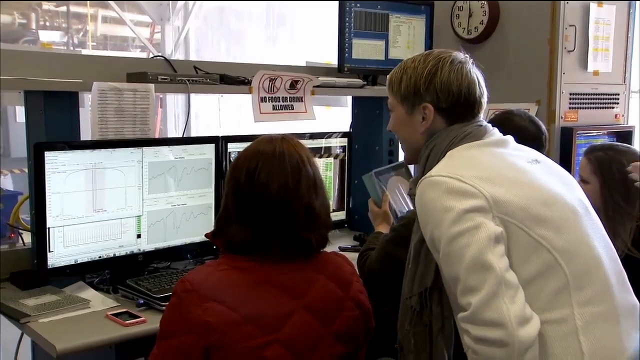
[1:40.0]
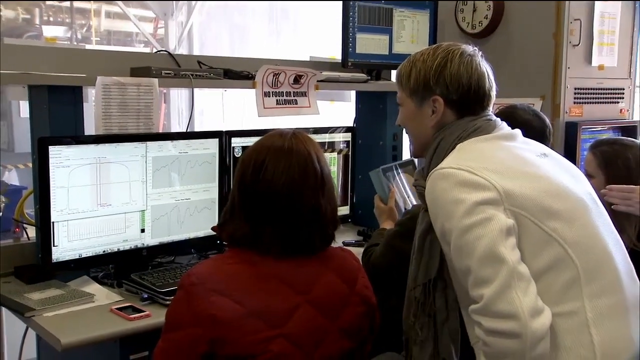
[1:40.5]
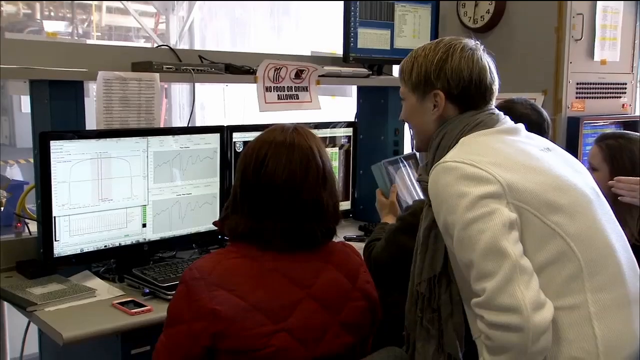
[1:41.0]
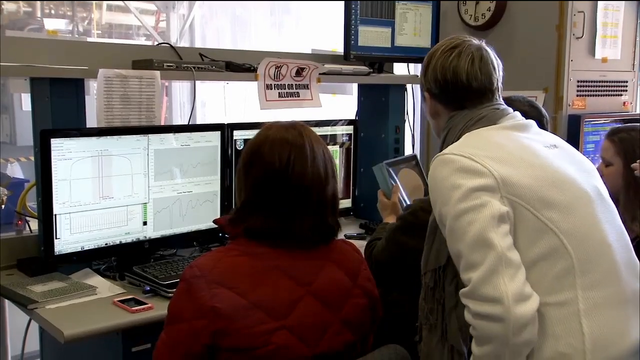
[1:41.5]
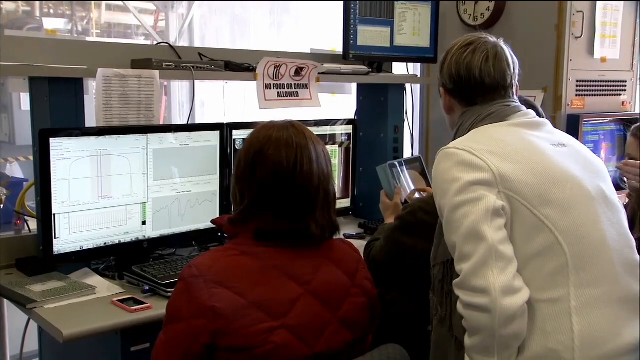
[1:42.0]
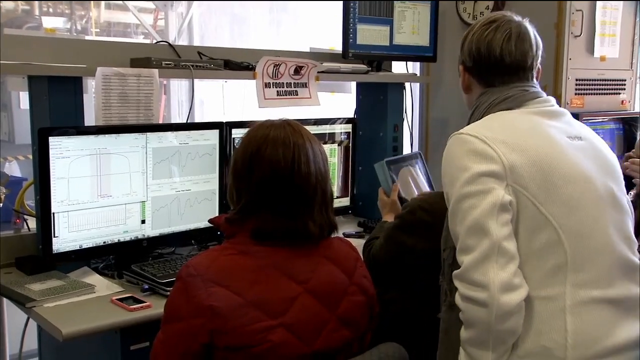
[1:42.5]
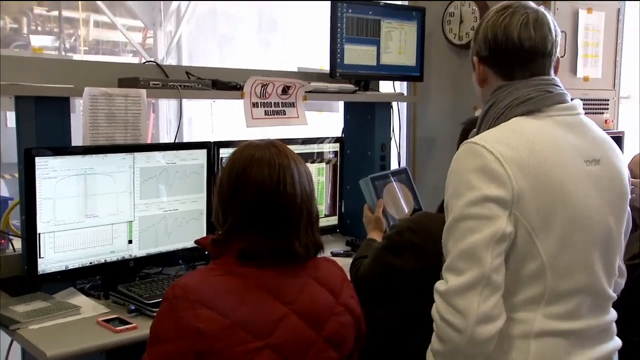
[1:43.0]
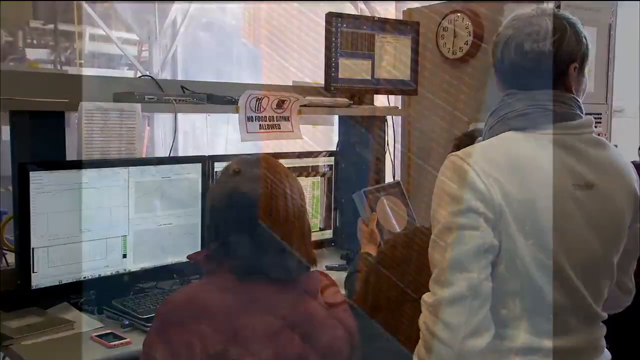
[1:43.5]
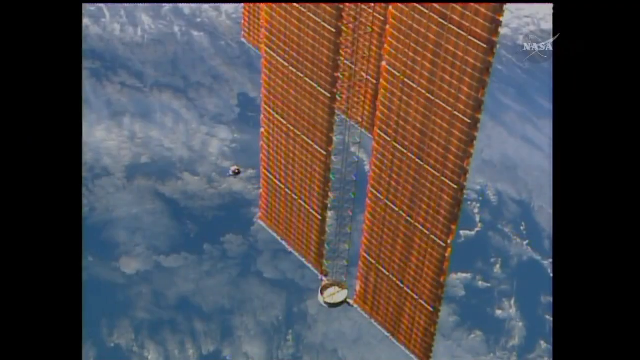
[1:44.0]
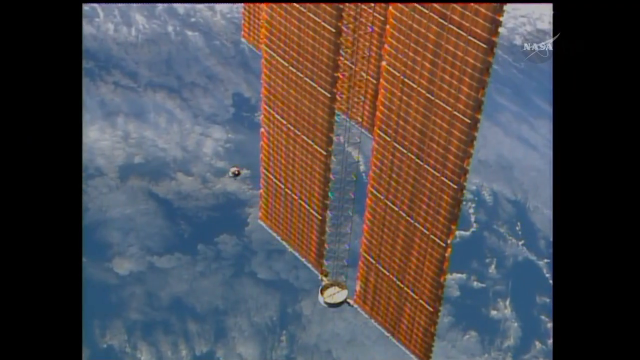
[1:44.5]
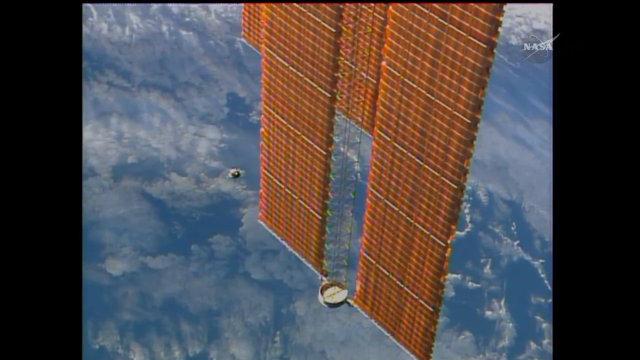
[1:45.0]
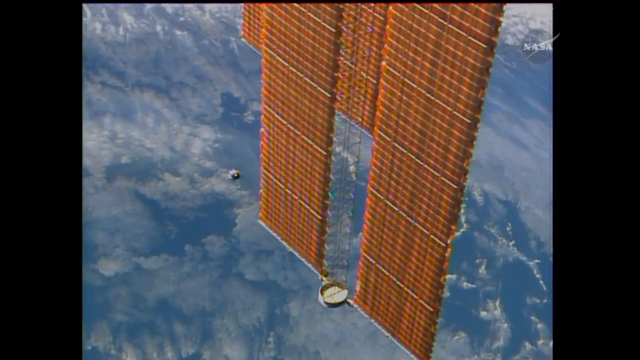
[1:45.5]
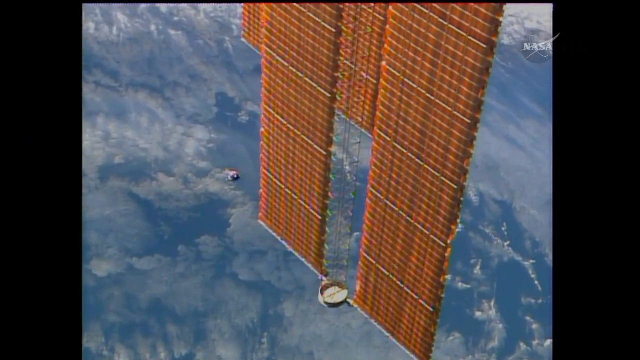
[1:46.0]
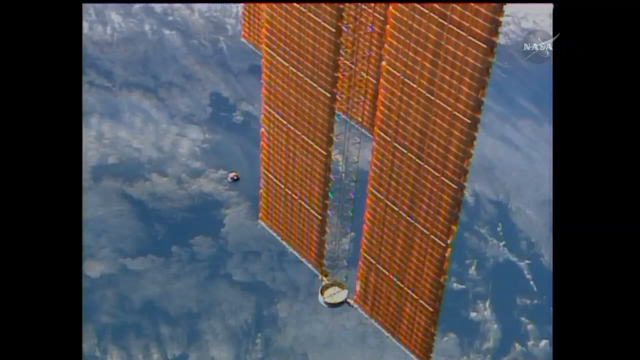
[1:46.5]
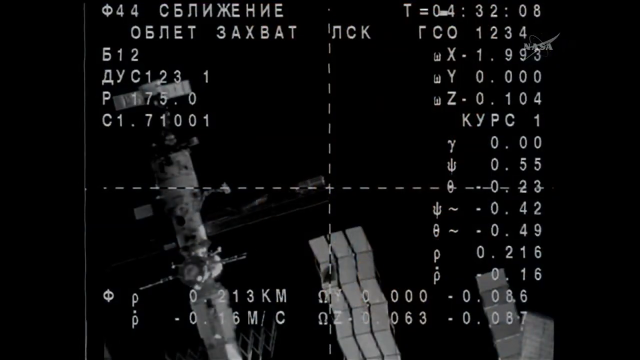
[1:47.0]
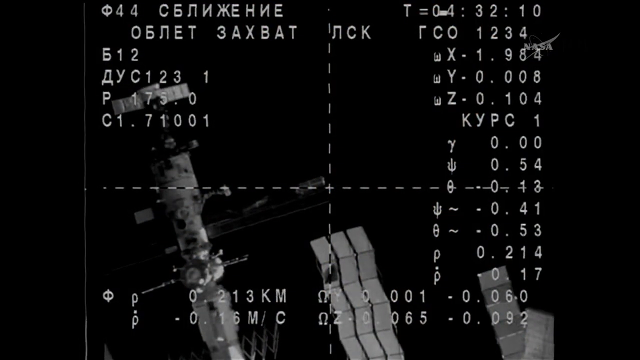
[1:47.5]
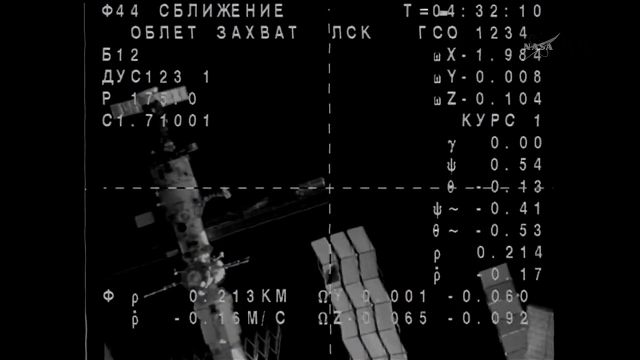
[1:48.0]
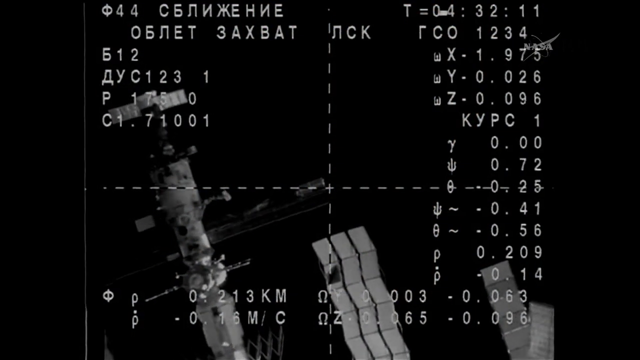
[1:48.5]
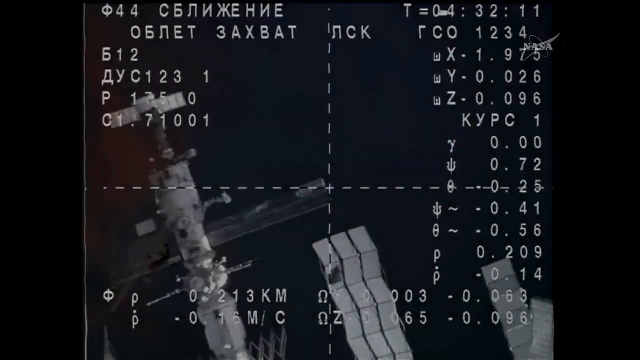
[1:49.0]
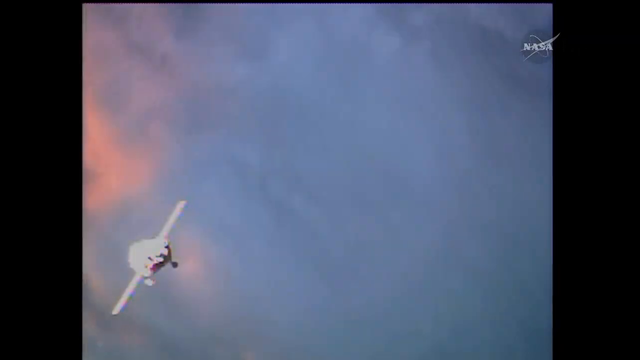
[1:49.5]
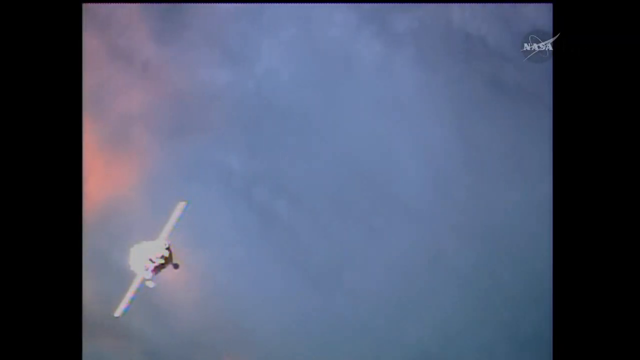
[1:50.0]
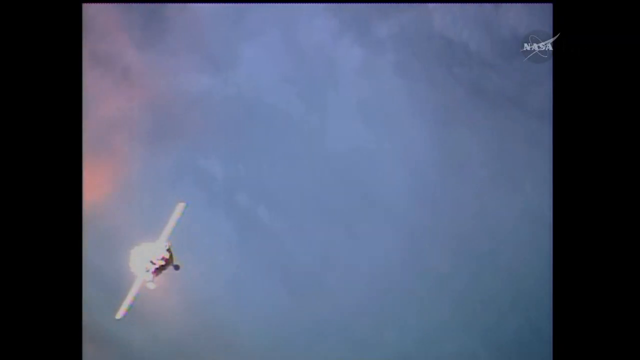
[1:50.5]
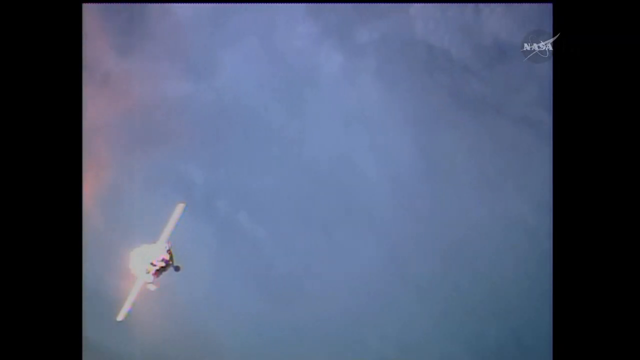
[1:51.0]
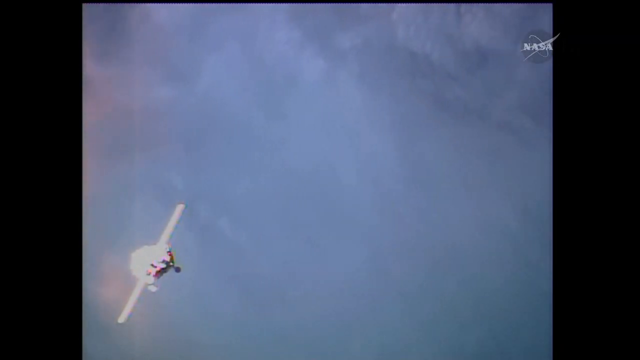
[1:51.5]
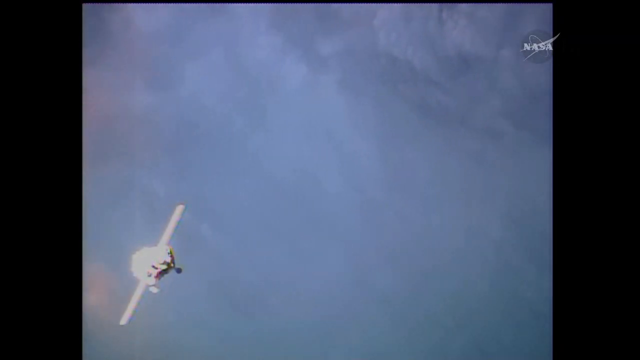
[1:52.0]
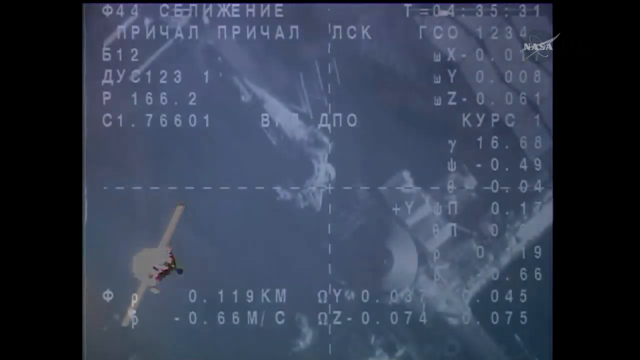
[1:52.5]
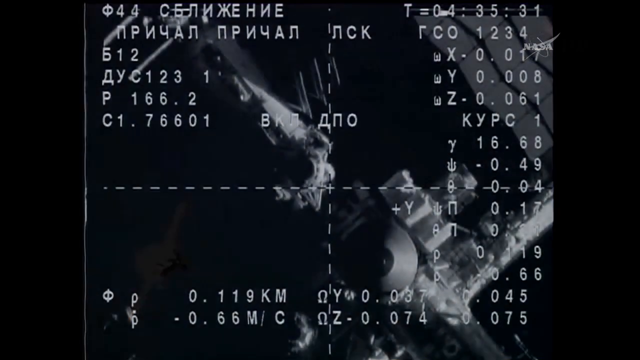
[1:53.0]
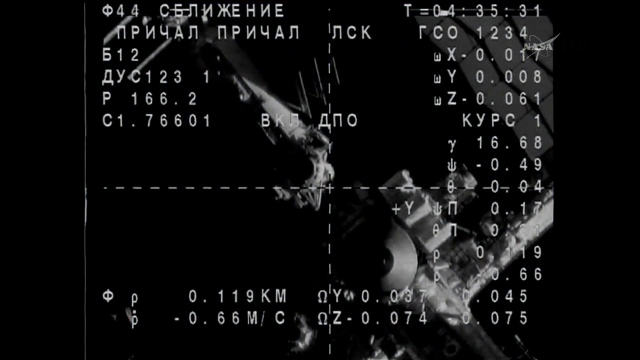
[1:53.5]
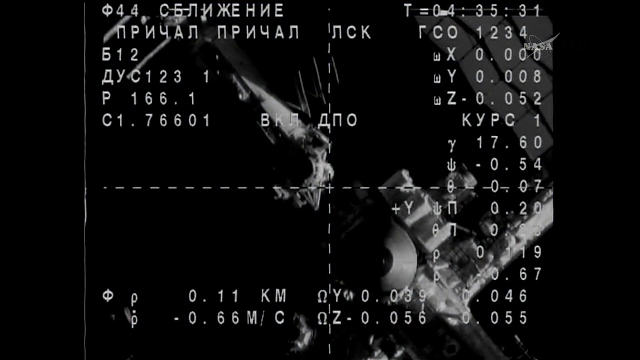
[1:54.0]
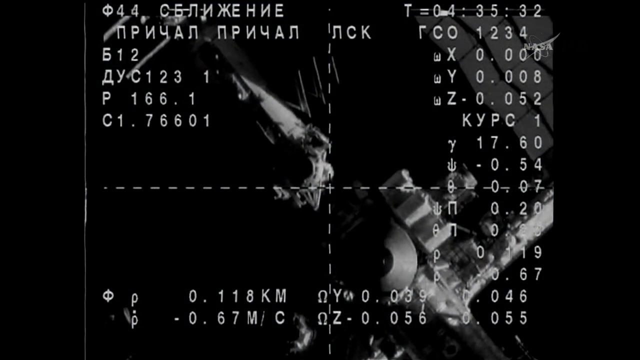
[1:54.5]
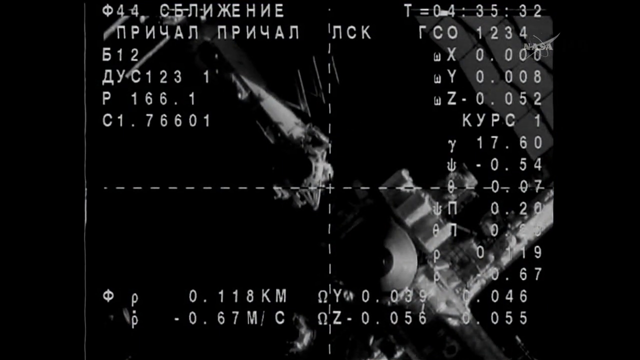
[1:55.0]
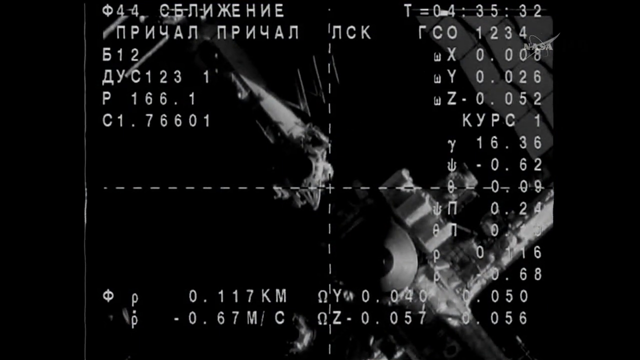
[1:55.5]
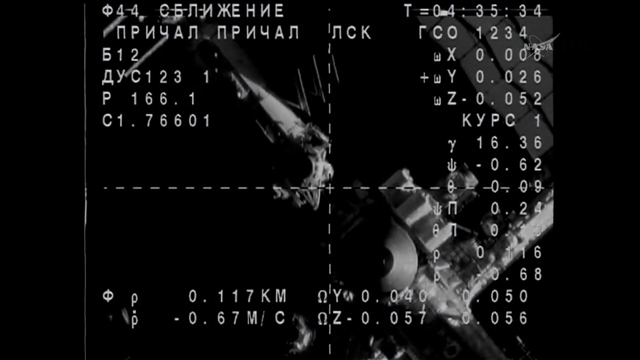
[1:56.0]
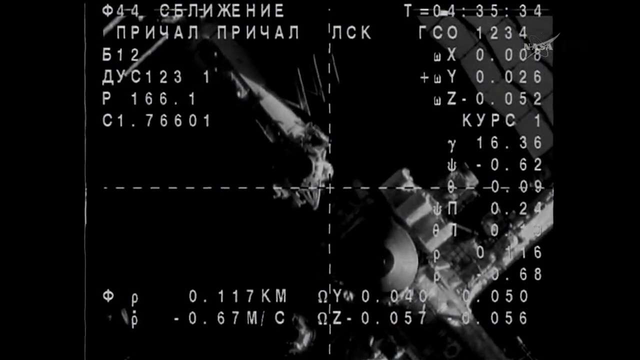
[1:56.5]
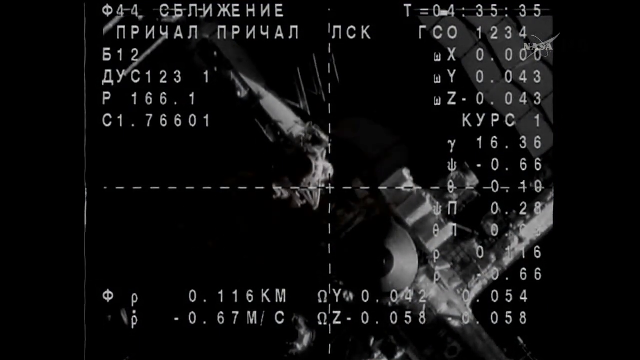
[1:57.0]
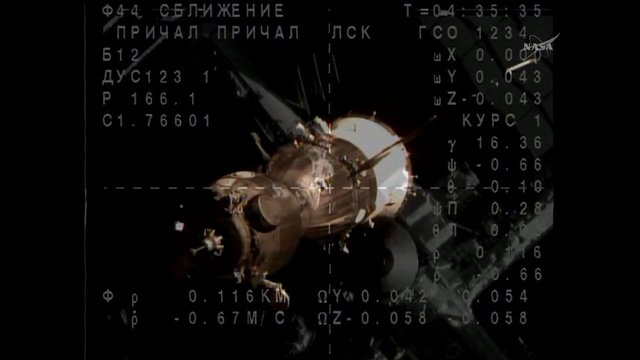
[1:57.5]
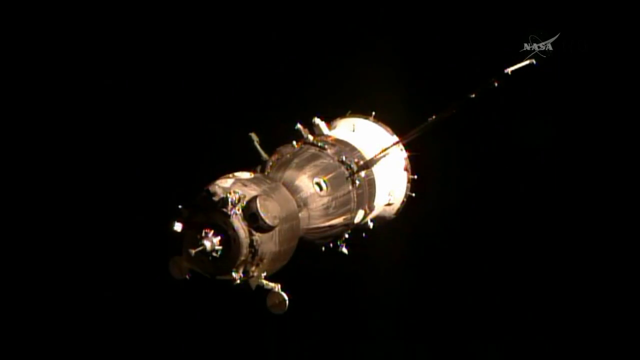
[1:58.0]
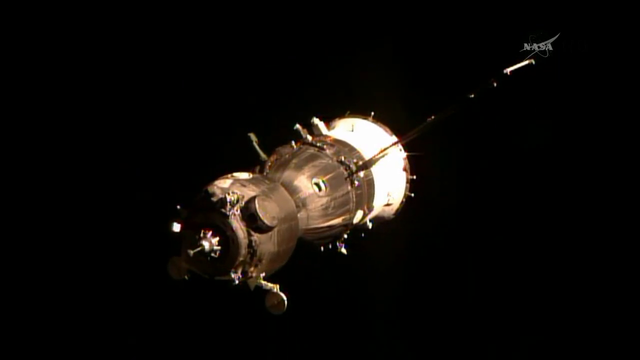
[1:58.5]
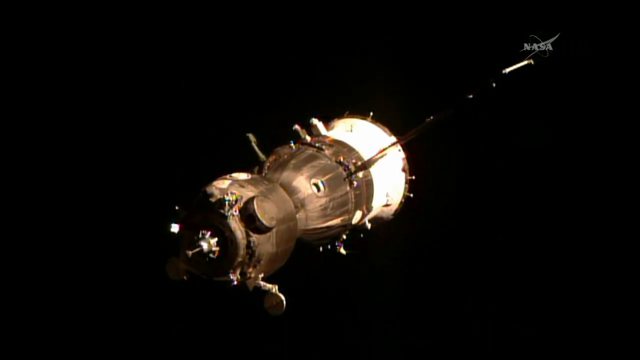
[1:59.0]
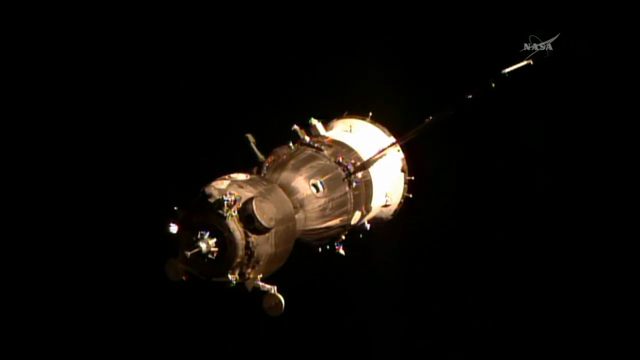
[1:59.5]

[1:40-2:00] A desk holds two computer monitors. A person with long brown hair in a red shirt sits in a chair facing a monitor, seen only from behind; to her right, someone else sits in a chair in front of another monitor. Behind them, a woman with short blonde hair, wearing a long-sleeve white shirt and a tan scarf, bends over looking between their shoulders at the monitors. The scene cuts to a view of the Earth from outer space seen through brown fins coming off a satellite; only one wing of the satellite is visible, not the whole satellite. Next, a shot recorded from the ground up at the sky shows the satellite, where only its form can be made out: the wings on the left and right and its body, without any details.